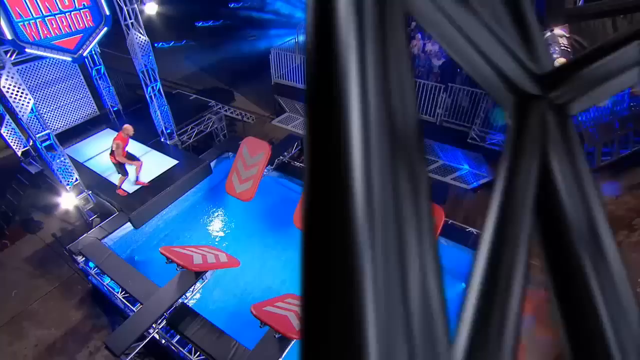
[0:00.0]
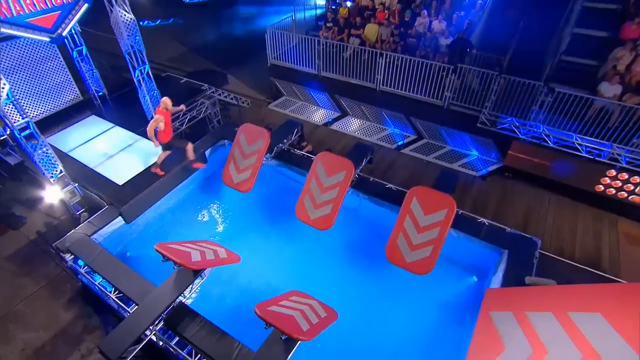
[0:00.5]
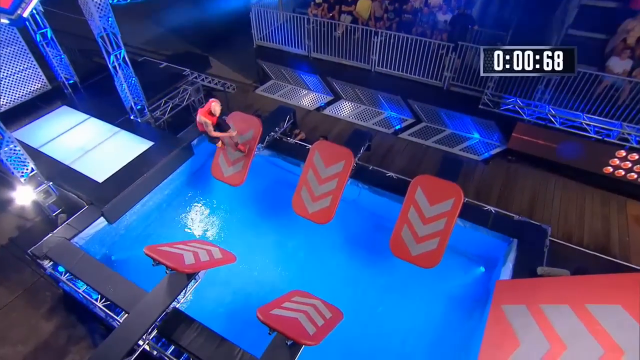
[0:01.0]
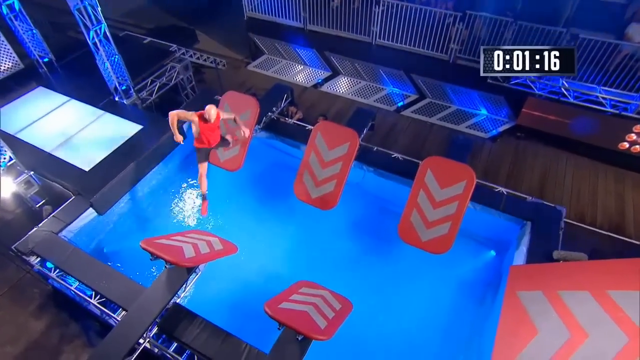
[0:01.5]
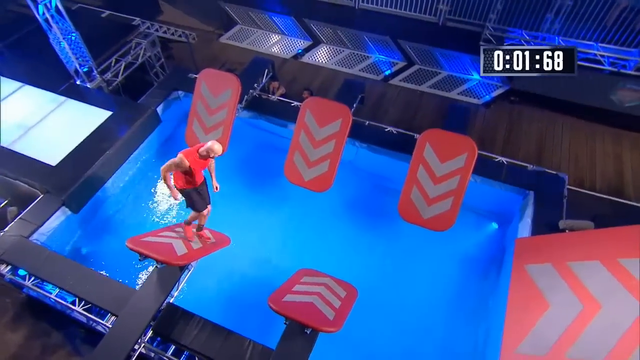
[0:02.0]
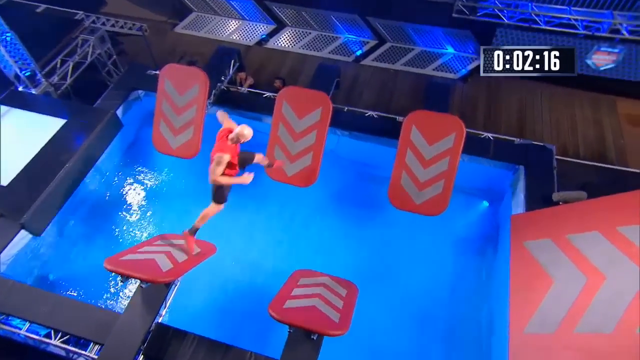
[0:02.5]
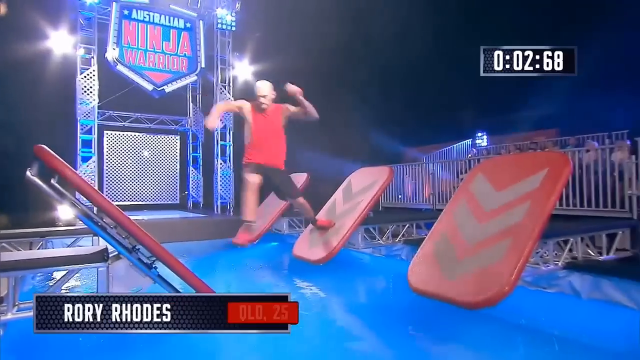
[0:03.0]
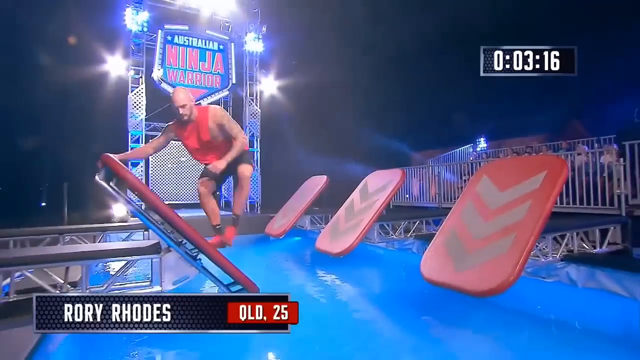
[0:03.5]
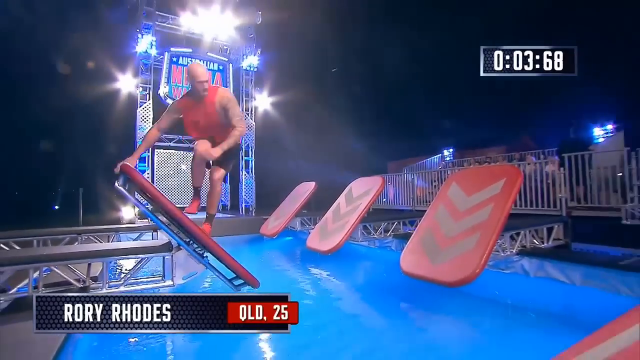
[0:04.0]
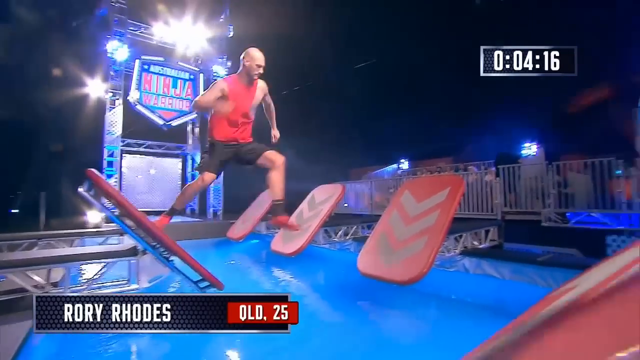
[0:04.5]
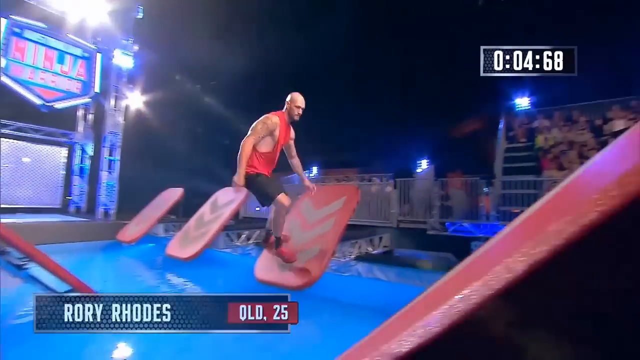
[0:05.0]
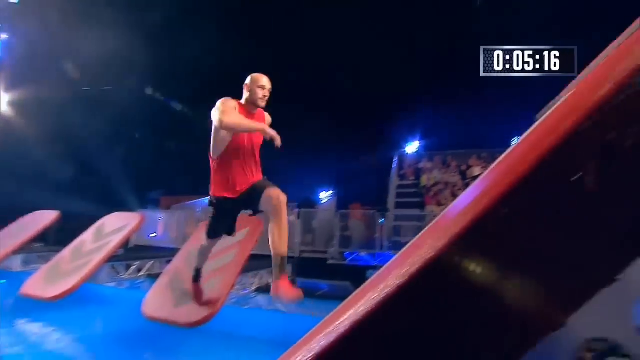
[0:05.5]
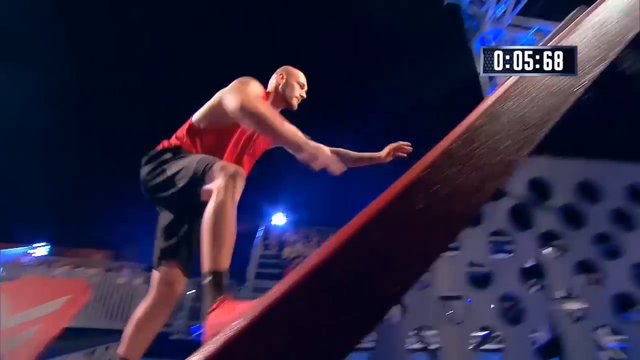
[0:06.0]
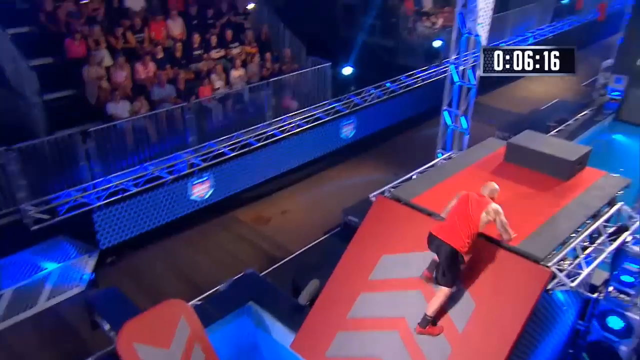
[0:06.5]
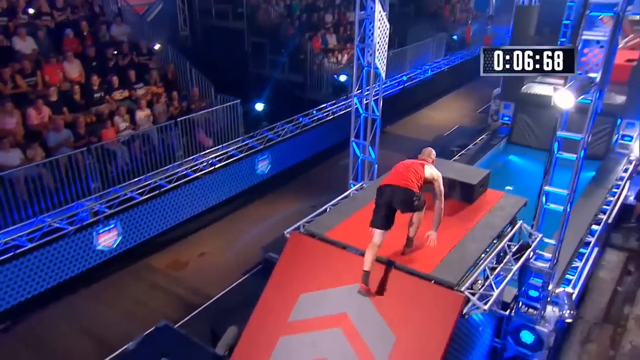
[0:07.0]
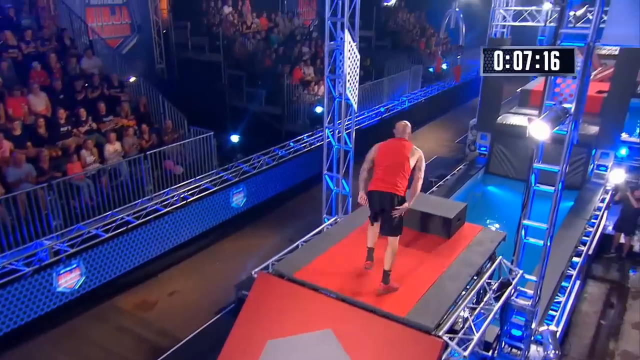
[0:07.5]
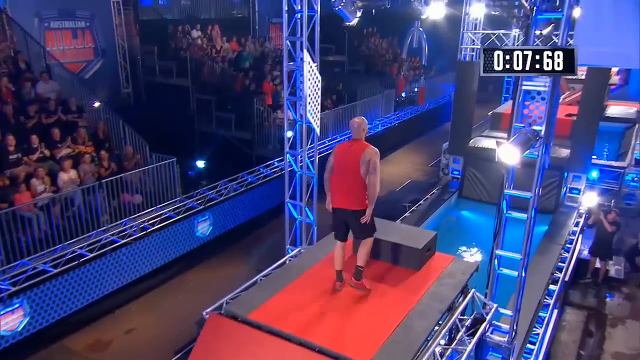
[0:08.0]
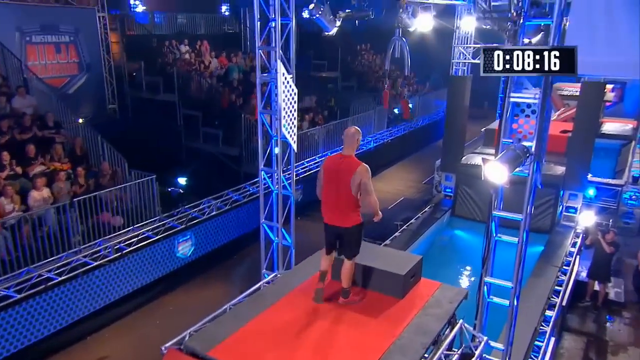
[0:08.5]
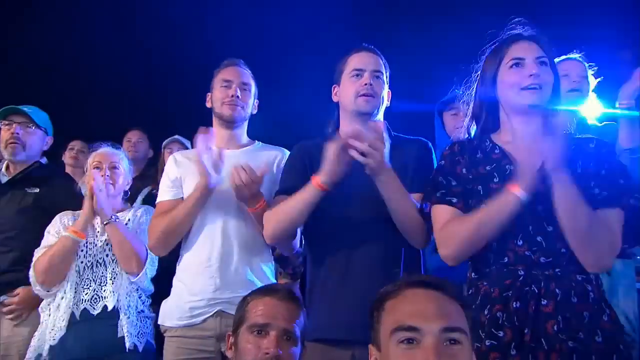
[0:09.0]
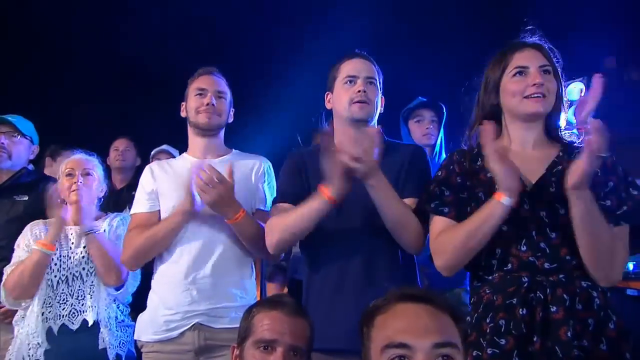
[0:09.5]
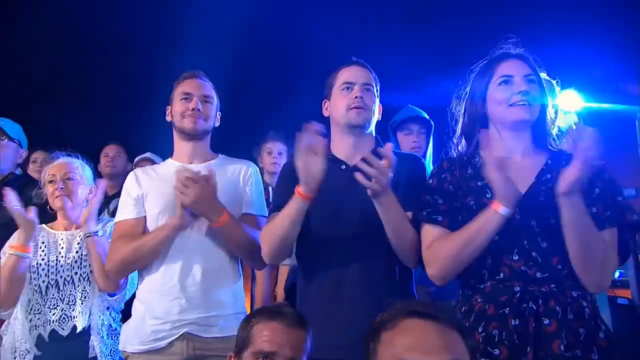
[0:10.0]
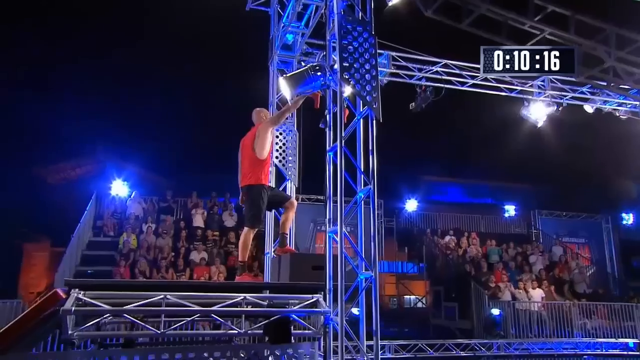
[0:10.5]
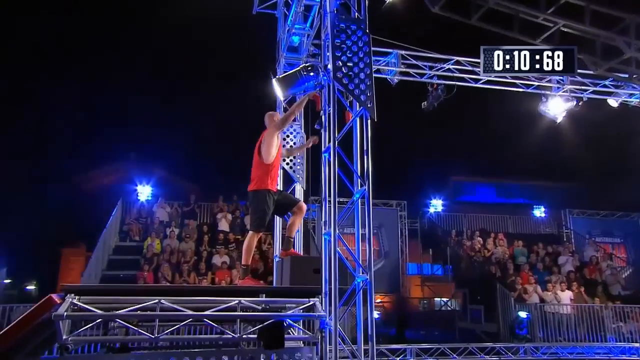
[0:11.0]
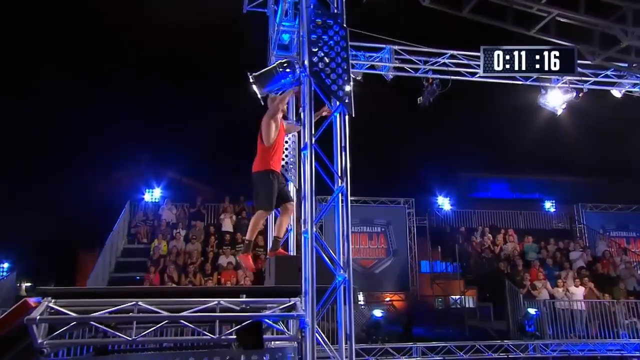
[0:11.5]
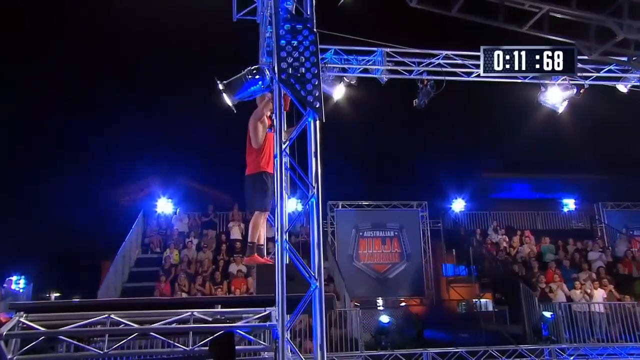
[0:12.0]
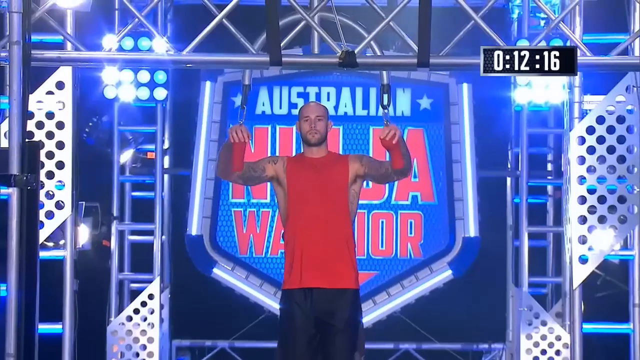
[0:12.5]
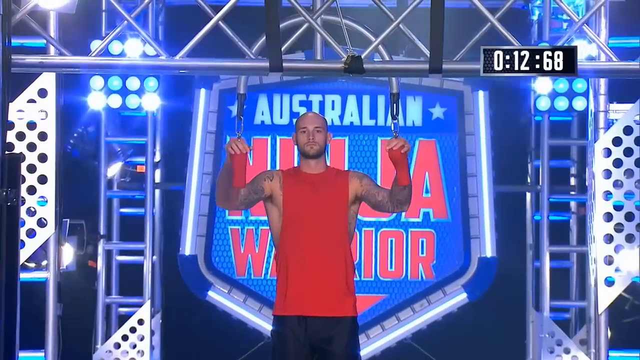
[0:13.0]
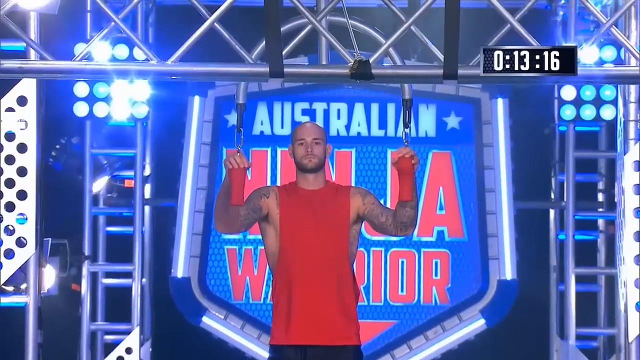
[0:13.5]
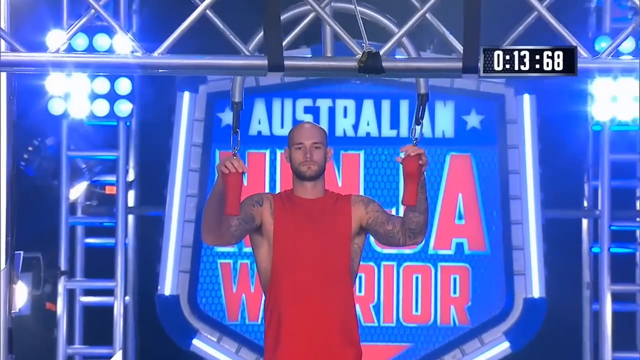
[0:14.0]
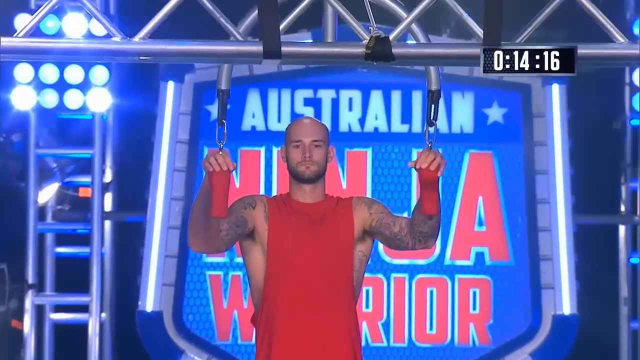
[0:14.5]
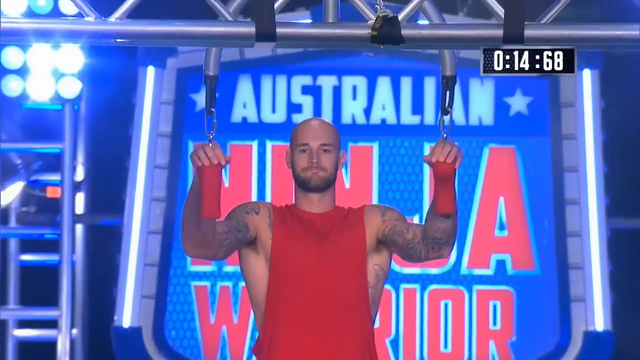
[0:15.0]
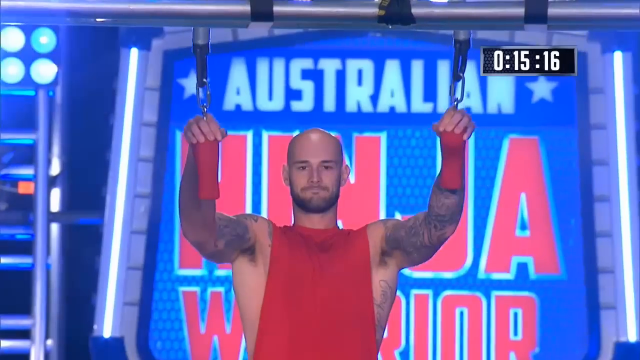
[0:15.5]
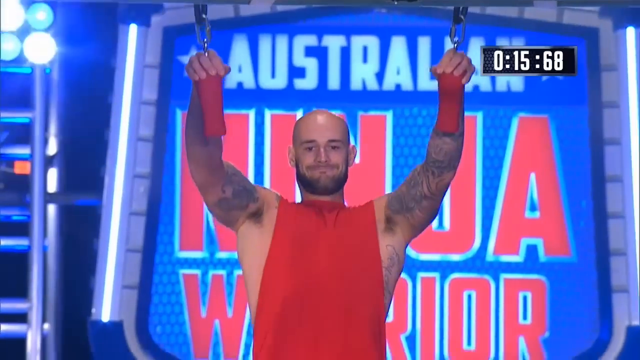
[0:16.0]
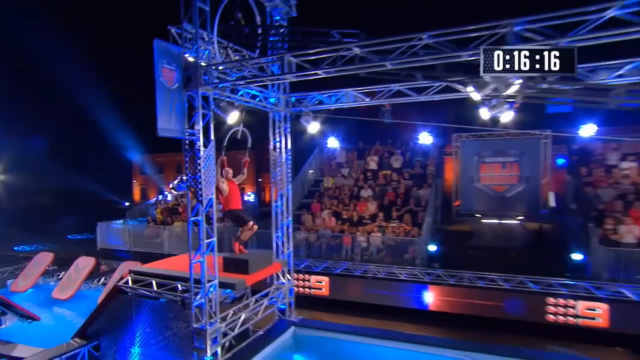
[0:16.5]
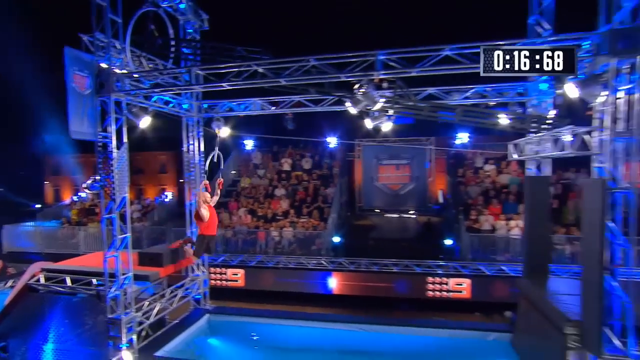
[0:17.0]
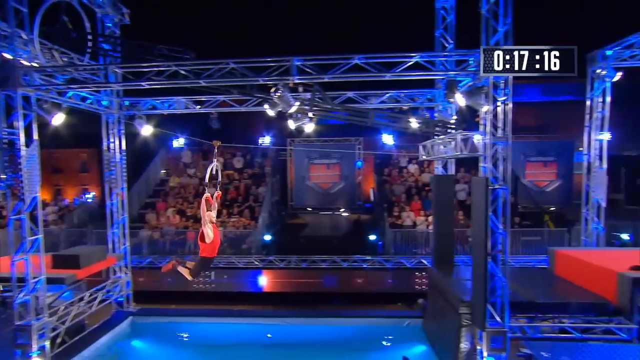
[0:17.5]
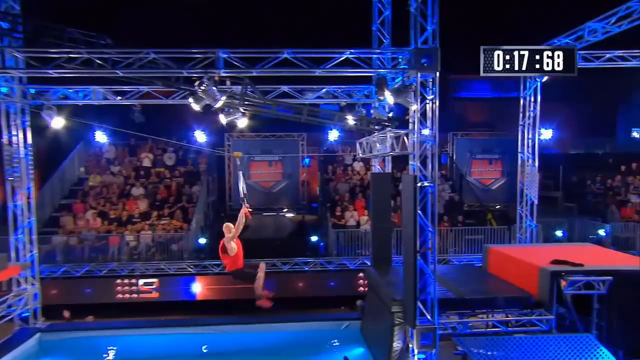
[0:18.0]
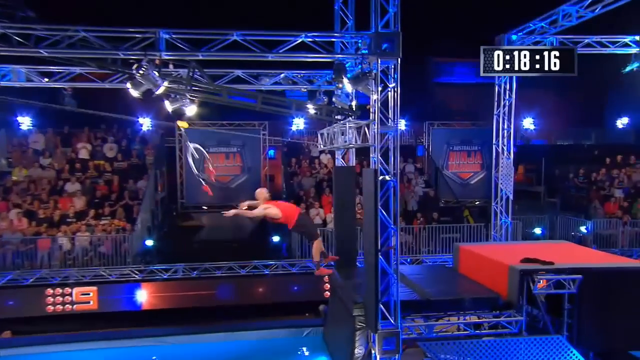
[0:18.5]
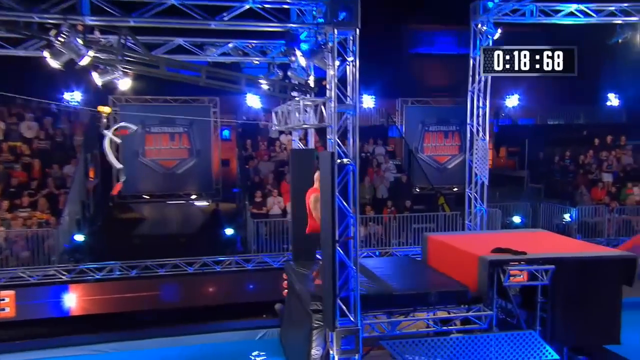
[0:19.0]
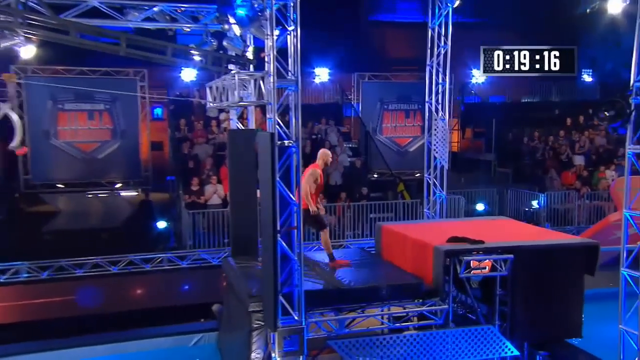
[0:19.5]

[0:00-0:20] Apparently from Australian Ninja Warrior, the video shows a participant trying to get across a pool of water. Red boats on the side are there for him to step on or use as leverage without falling into the water. People cheer him on, and there appear to be a lot of people present. He holds something like a cable and uses it to descend to another point. The participant wears a red sleeveless shirt, black shorts and red sneakers.